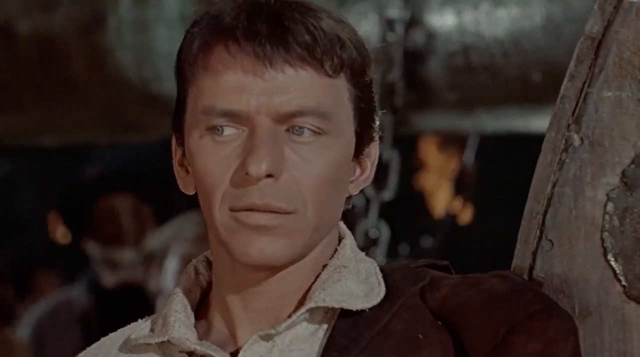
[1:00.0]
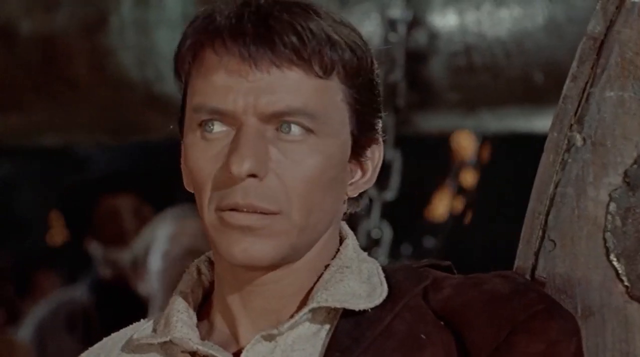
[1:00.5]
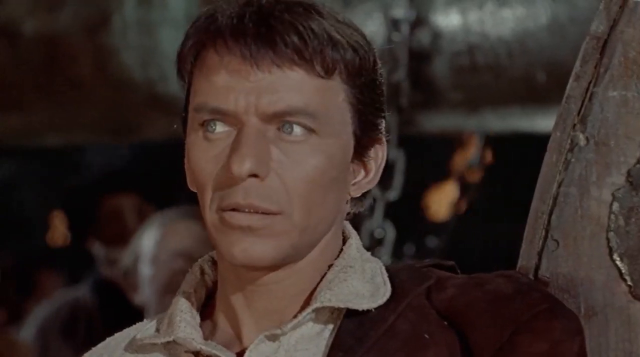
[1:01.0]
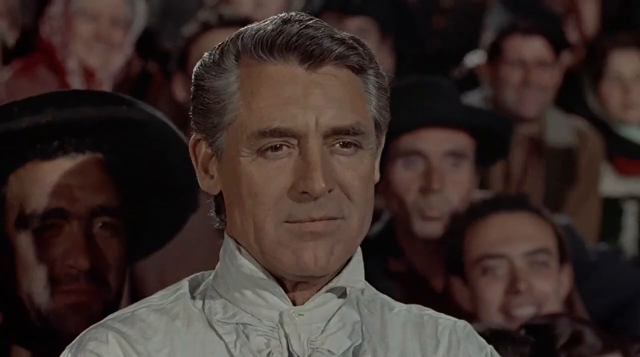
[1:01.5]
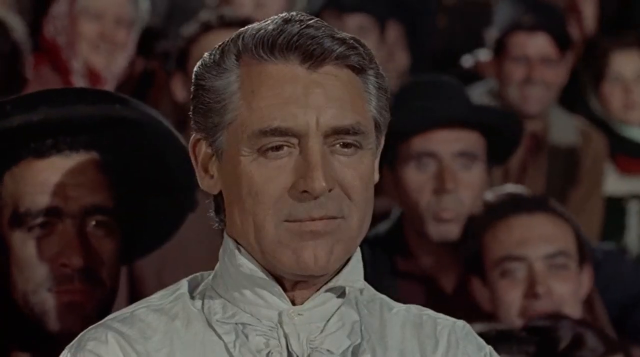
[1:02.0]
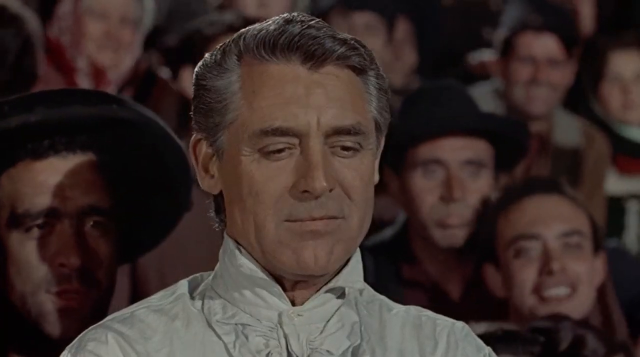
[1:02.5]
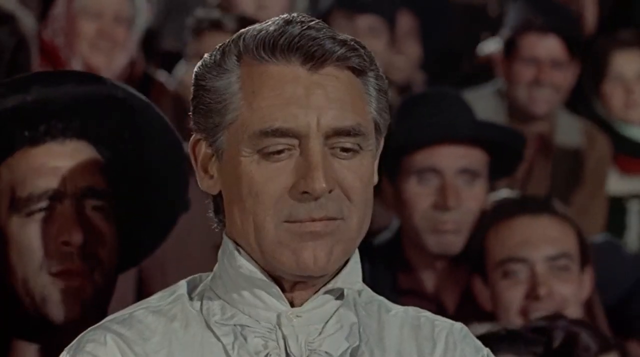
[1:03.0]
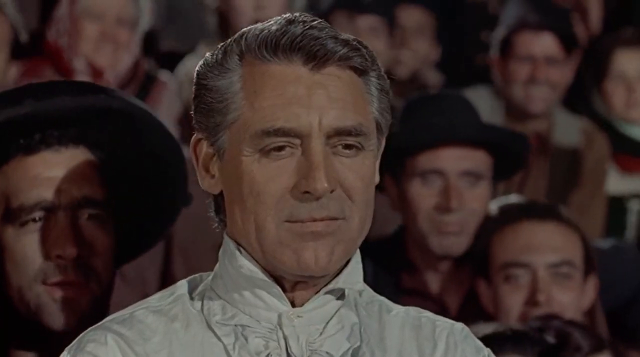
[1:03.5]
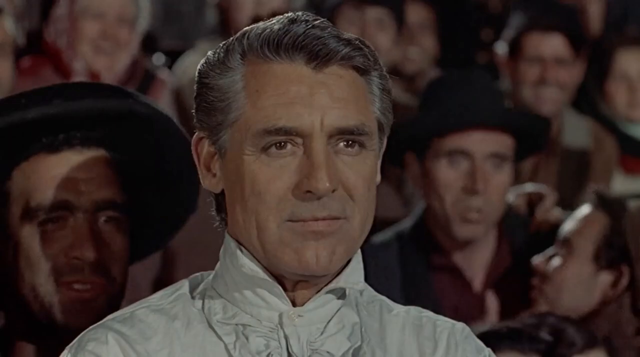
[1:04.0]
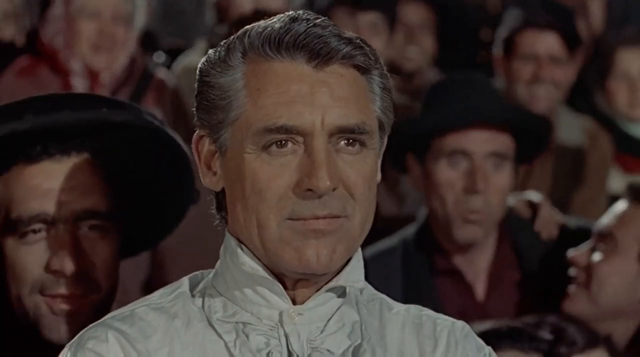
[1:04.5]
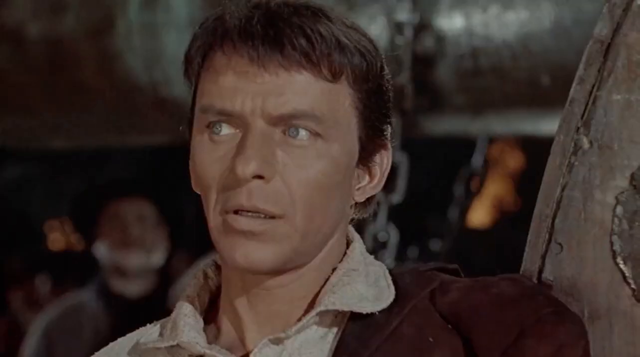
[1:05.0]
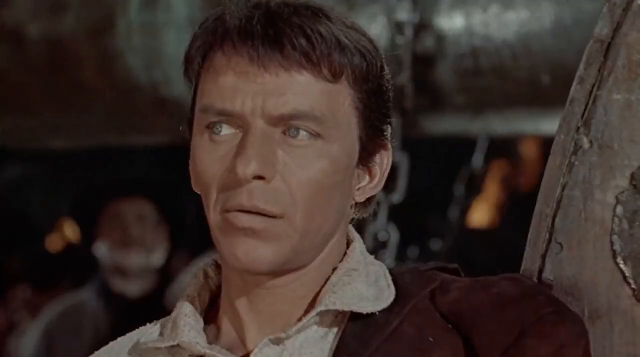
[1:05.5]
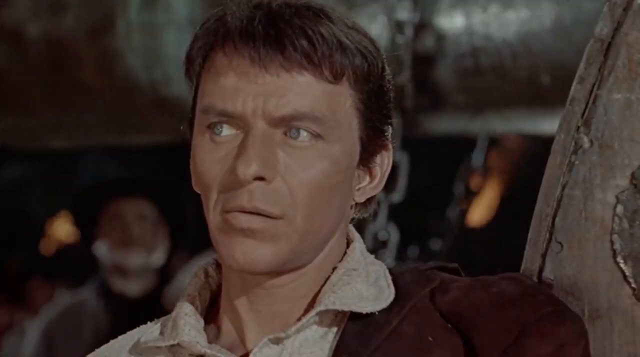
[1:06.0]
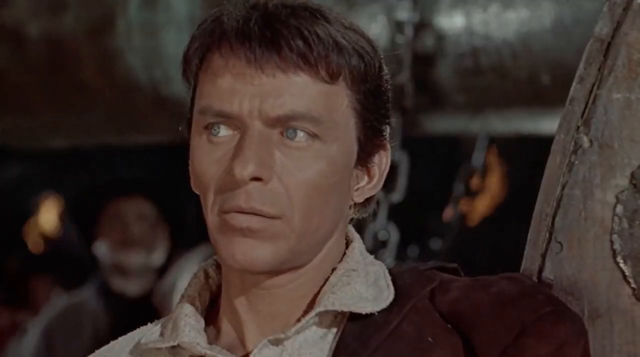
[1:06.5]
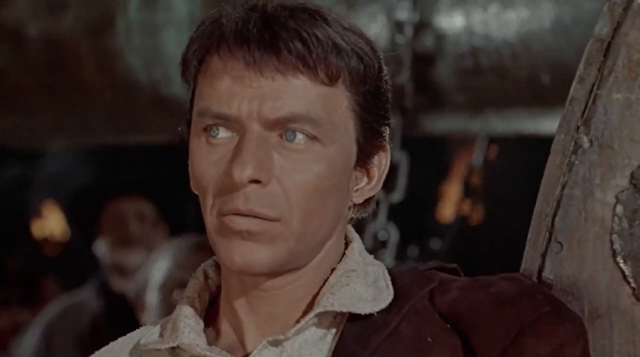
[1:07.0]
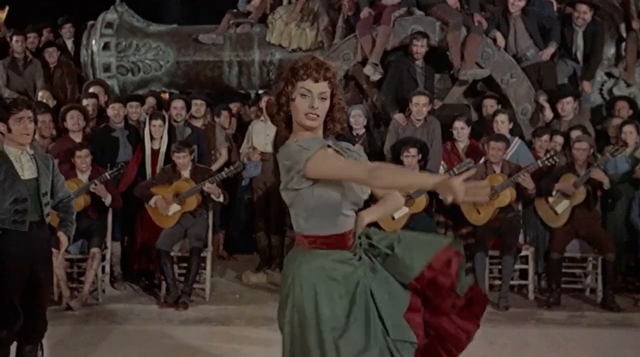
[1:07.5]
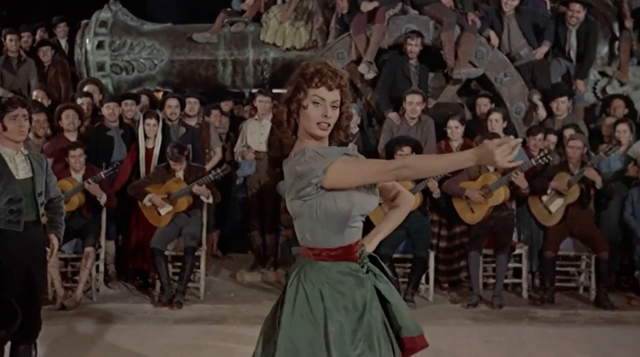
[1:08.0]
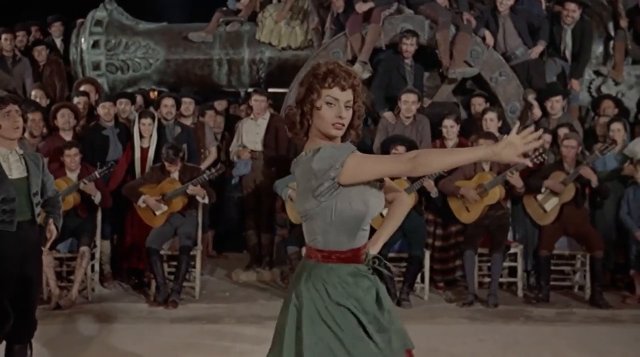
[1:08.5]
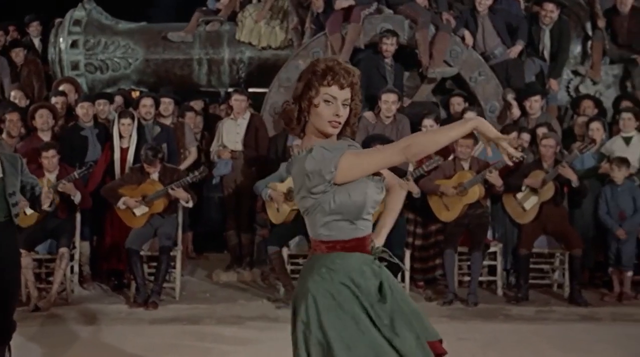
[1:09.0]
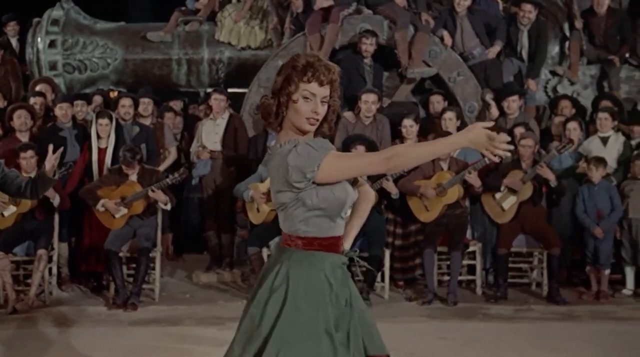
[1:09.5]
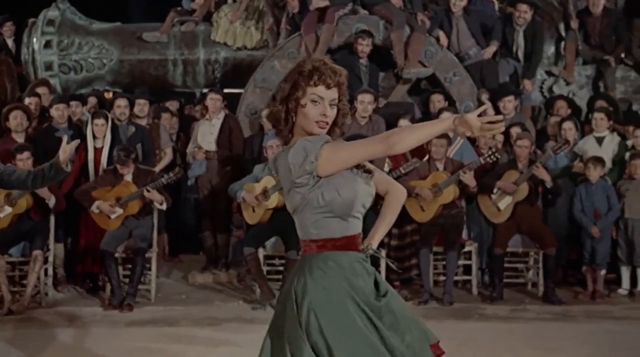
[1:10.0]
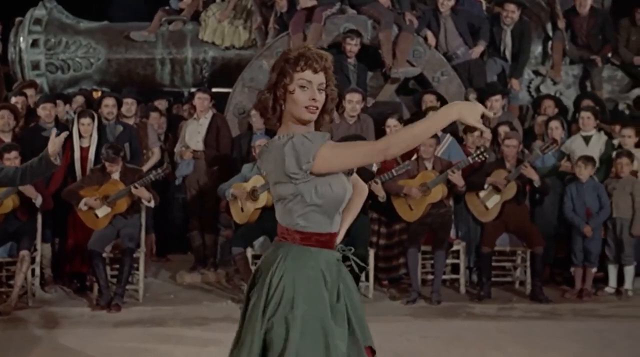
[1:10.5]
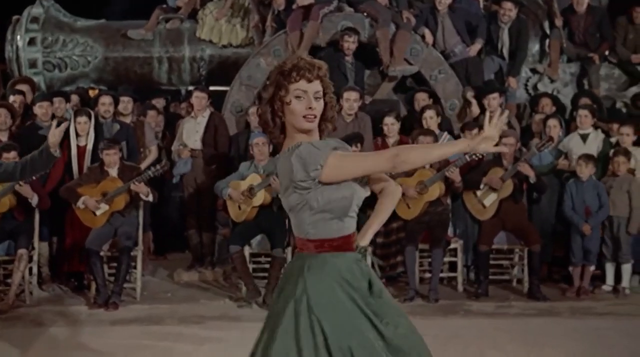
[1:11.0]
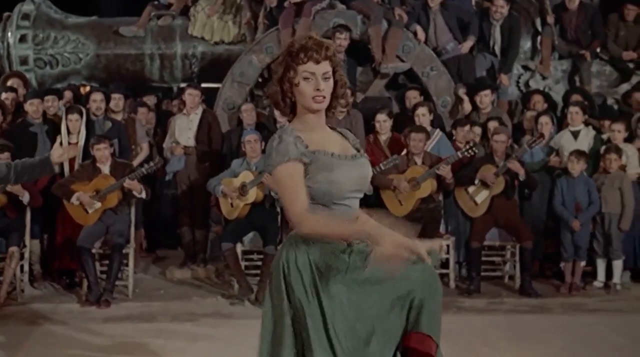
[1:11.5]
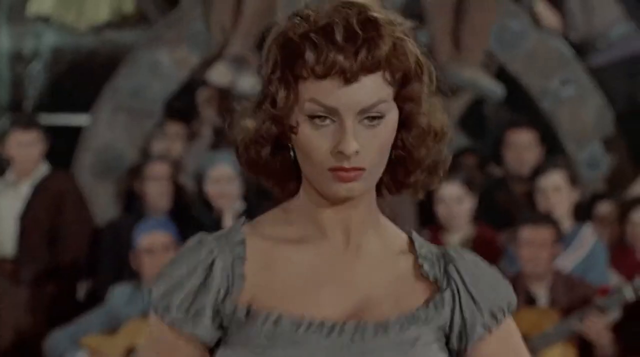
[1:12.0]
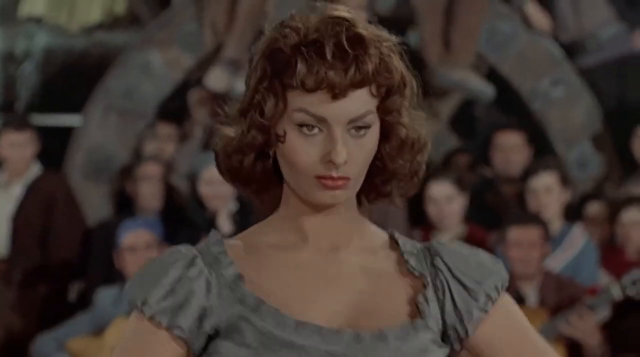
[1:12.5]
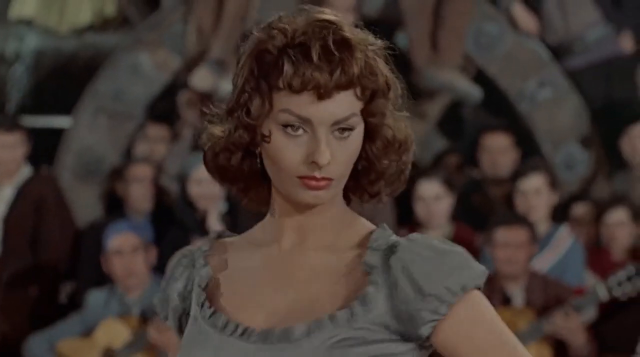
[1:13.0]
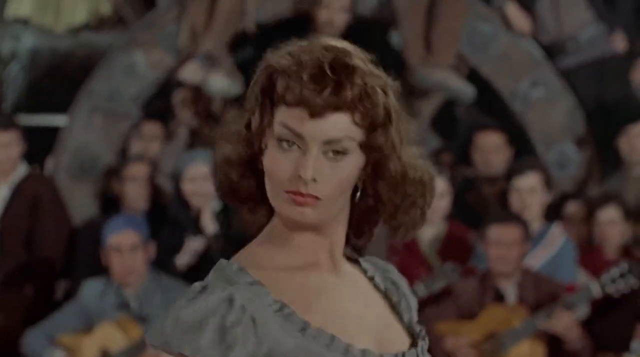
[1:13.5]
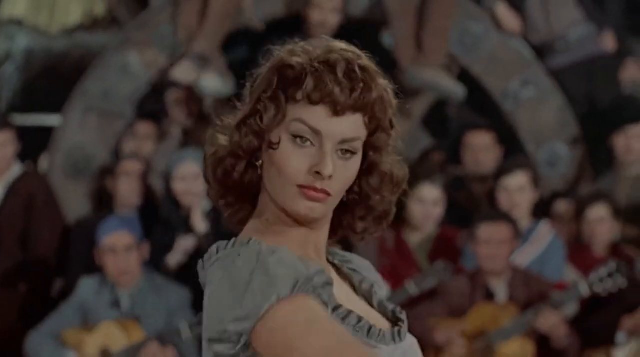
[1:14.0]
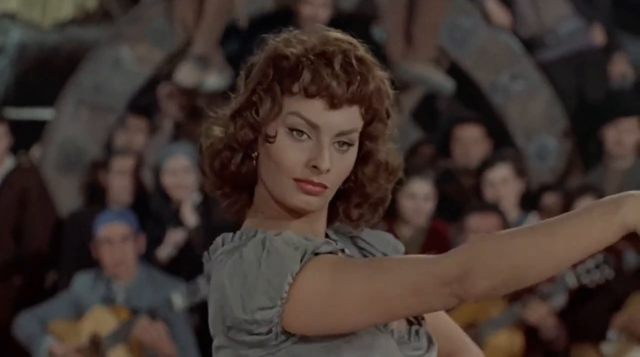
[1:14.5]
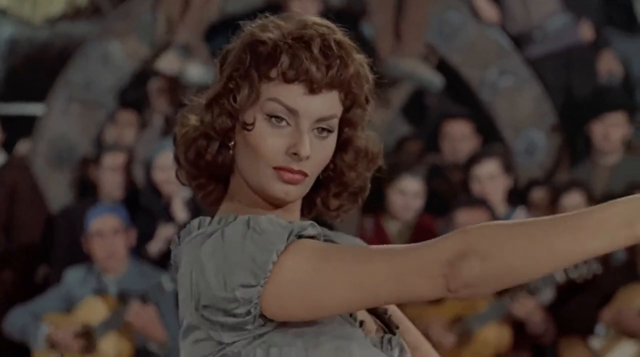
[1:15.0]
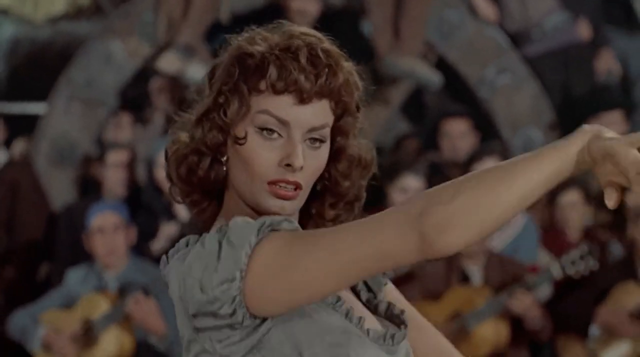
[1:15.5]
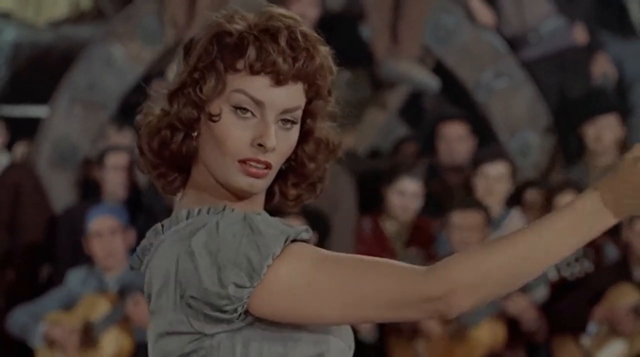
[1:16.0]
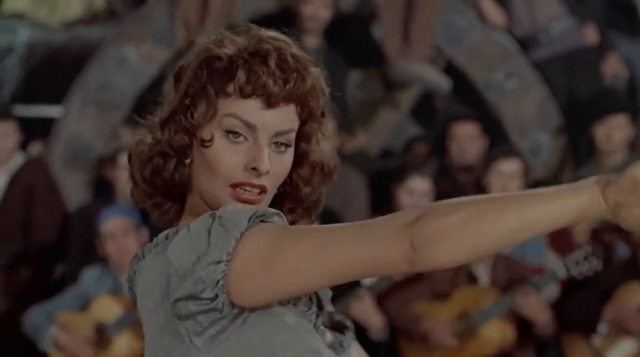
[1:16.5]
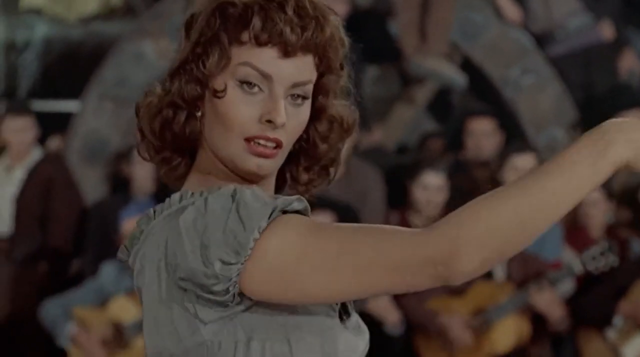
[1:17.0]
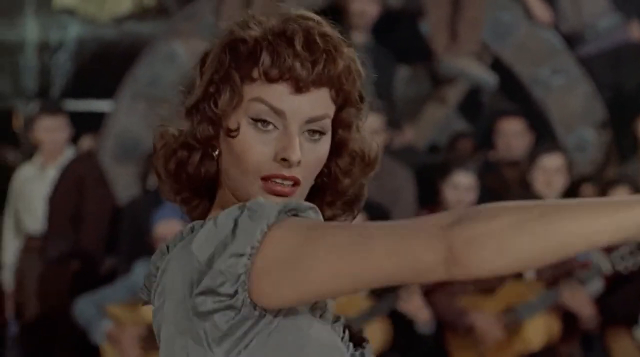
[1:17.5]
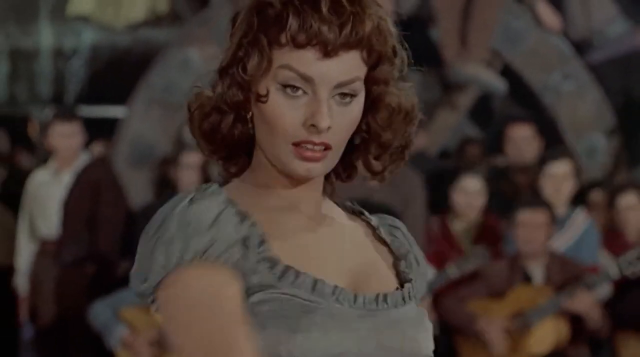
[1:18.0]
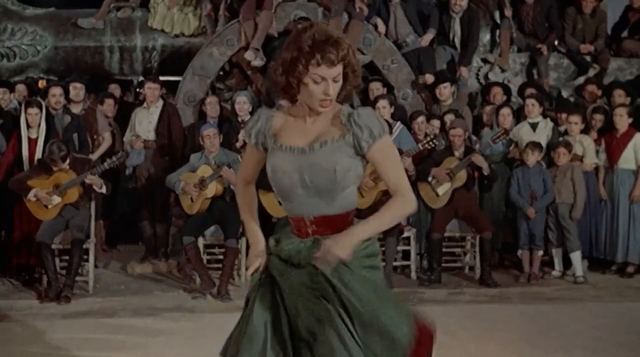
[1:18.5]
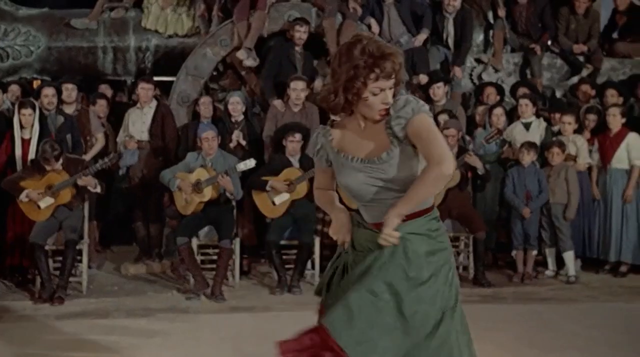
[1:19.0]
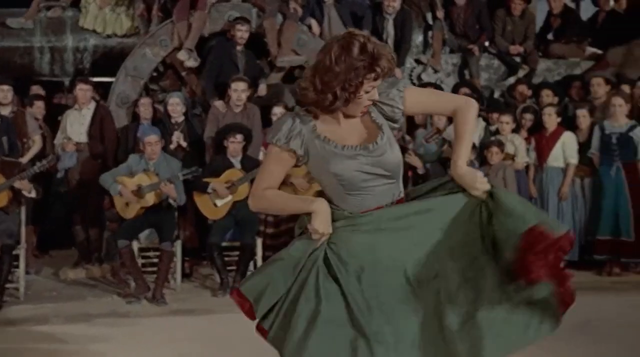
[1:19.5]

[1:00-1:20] The scene focuses on facial expressions. First the woman dances, then the shot cuts to the other man in the audience with the smarter white shirt, who looks like he is looking the woman up and down in a suggestive way. She seems to still be enjoying this, but her partner looks very jealous and visibly upset, giving the man a look, while the man in the white shirt is not looking at the partner. The filming is very dark with dull colours, which looks quite sinister, especially as the shots keep cutting to close-ups of people's faces where they are looking. Fewer audience members are visible, except when the woman is dancing and the people behind her can be seen. For the most part the audience is still enjoying it; only her partner is not.